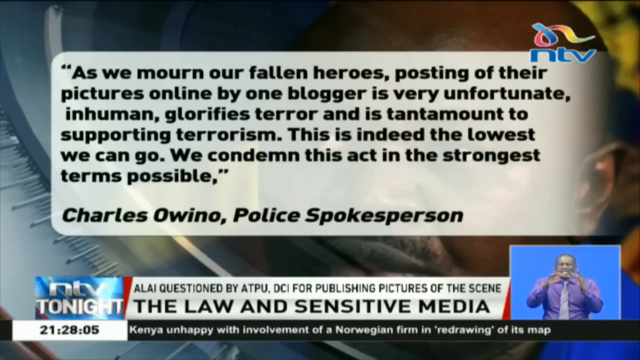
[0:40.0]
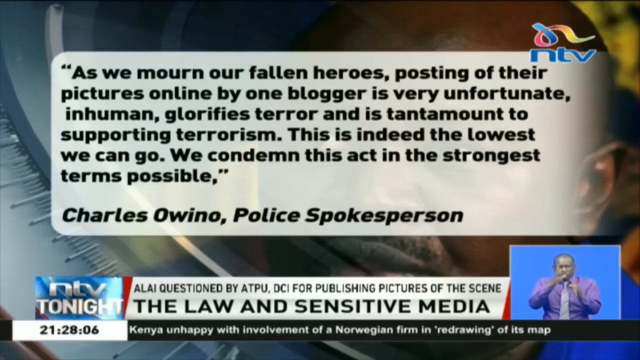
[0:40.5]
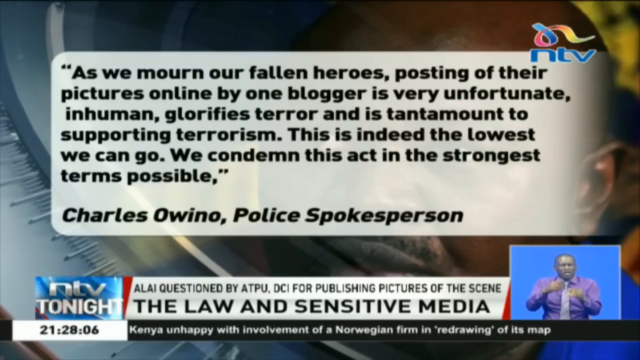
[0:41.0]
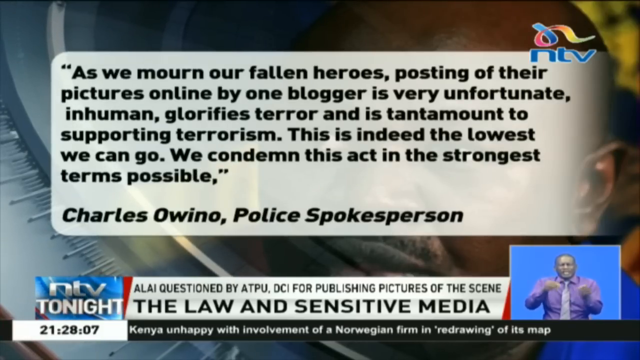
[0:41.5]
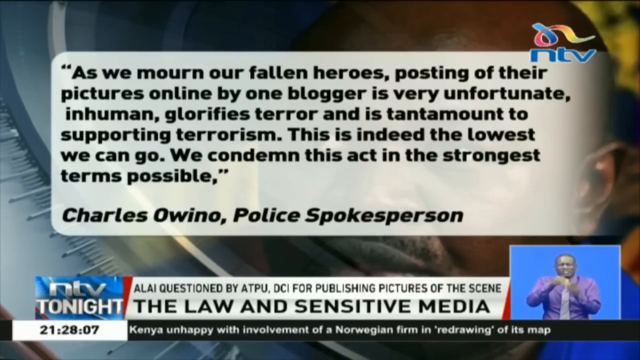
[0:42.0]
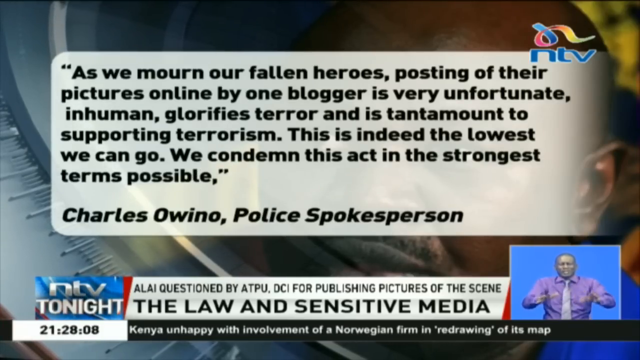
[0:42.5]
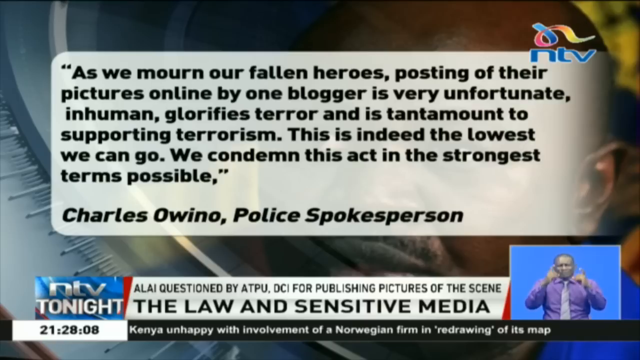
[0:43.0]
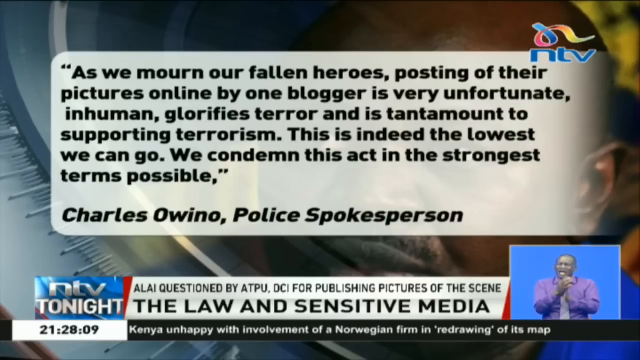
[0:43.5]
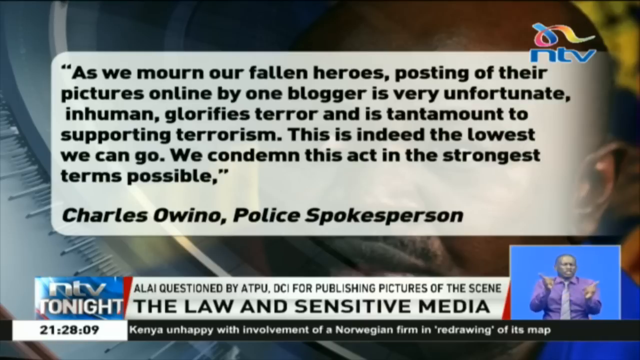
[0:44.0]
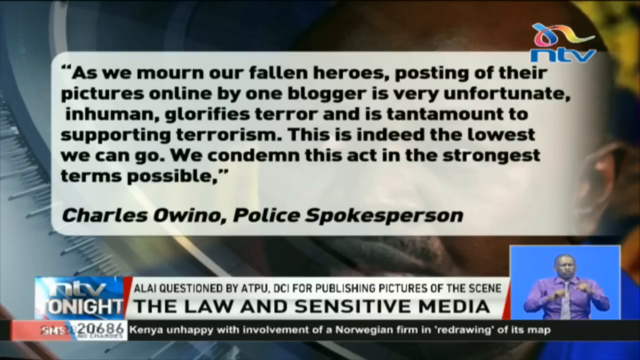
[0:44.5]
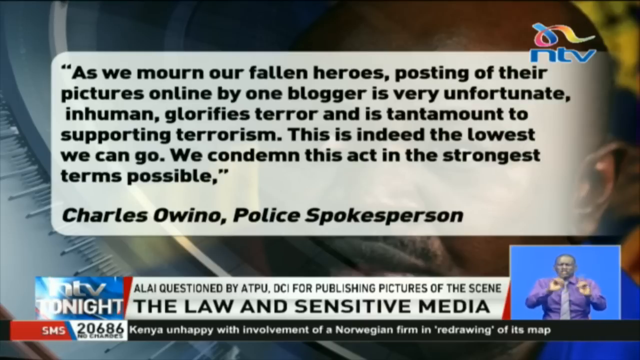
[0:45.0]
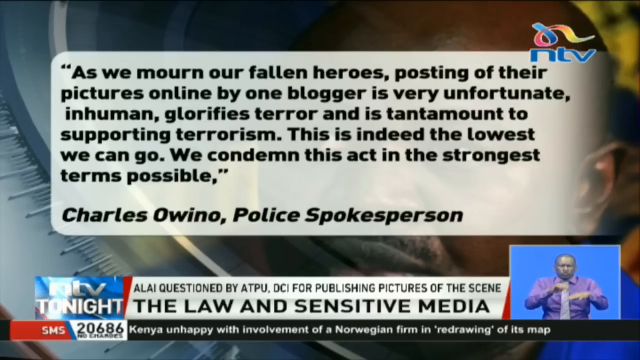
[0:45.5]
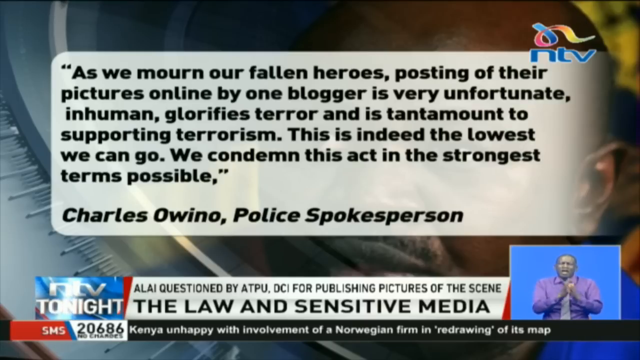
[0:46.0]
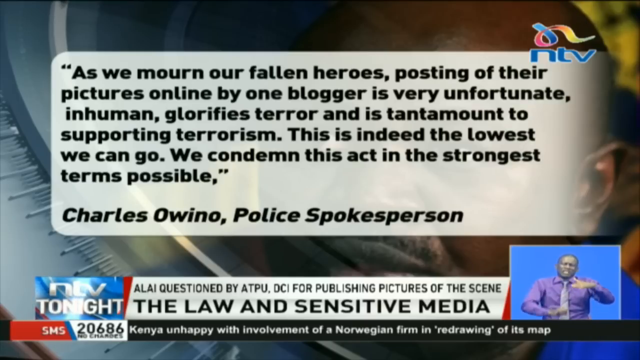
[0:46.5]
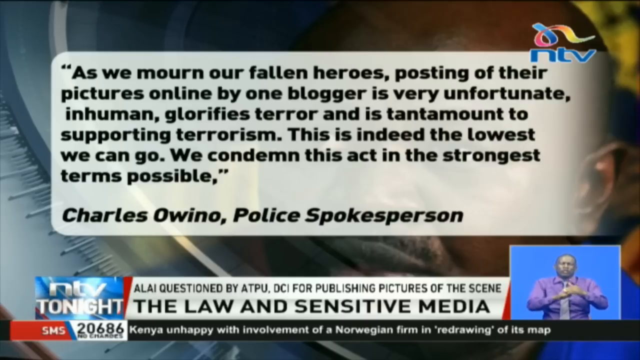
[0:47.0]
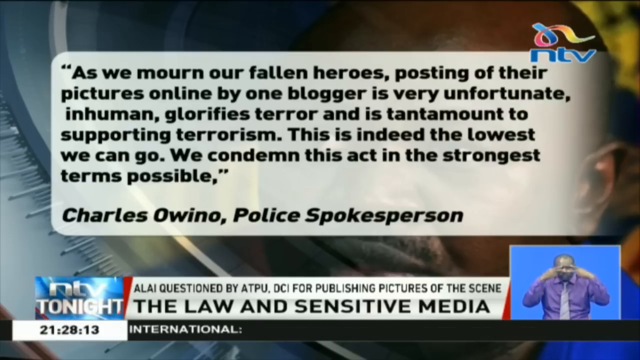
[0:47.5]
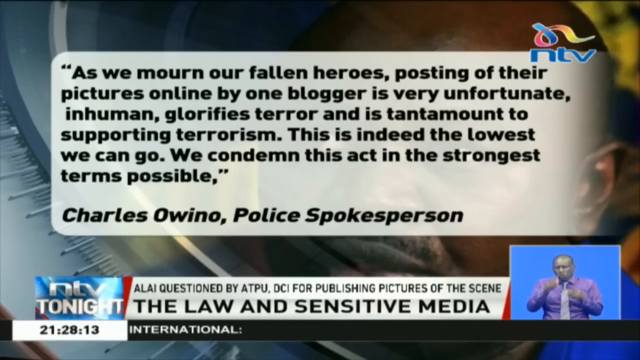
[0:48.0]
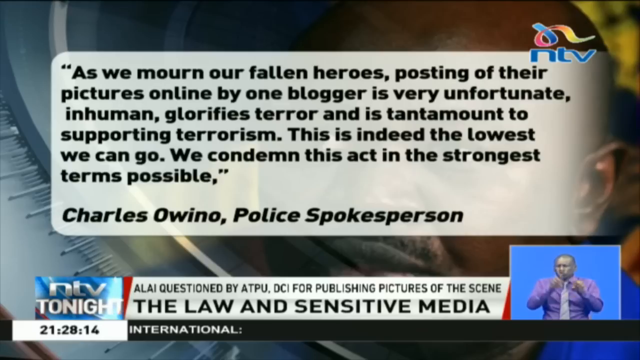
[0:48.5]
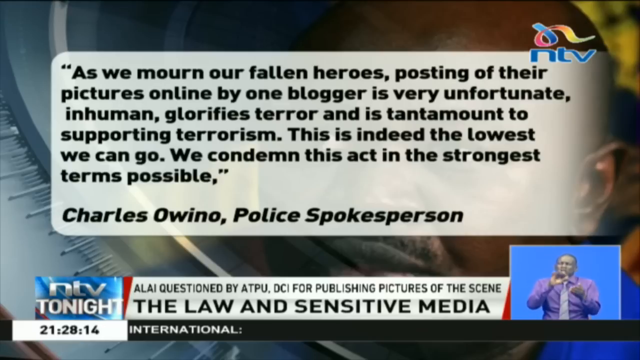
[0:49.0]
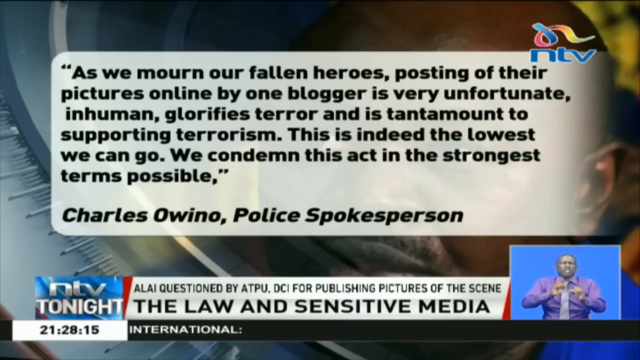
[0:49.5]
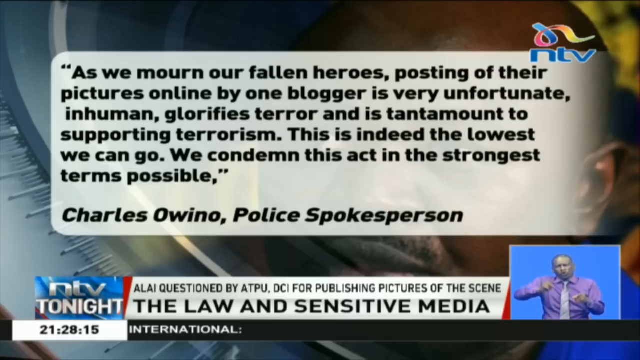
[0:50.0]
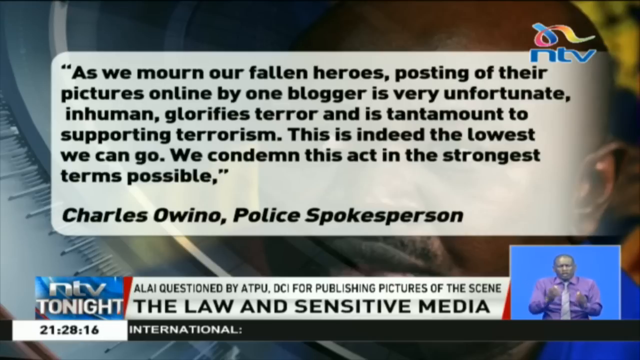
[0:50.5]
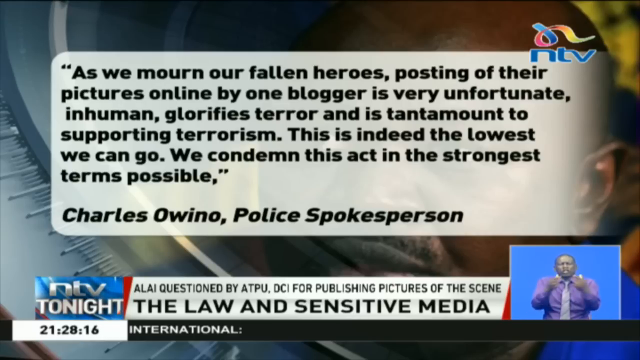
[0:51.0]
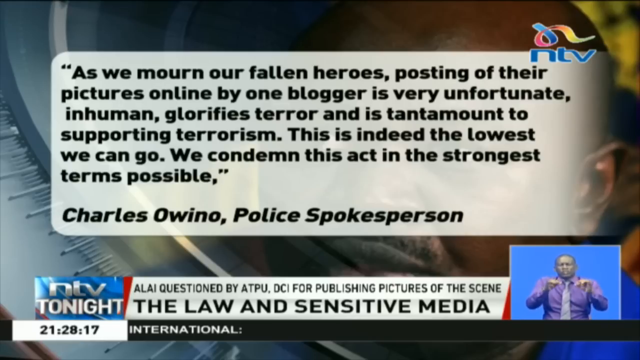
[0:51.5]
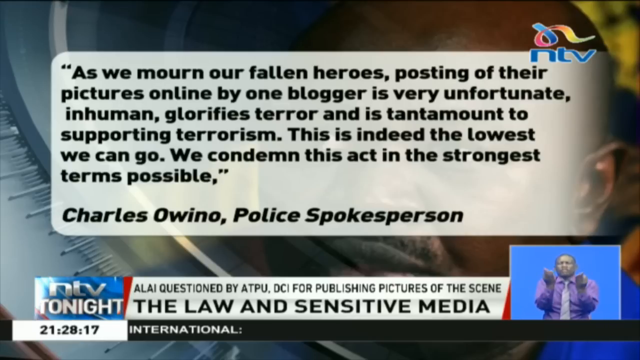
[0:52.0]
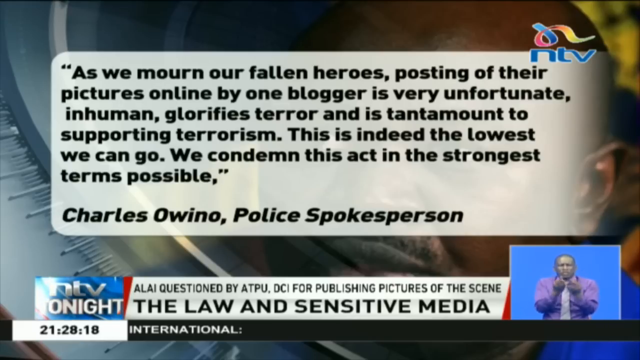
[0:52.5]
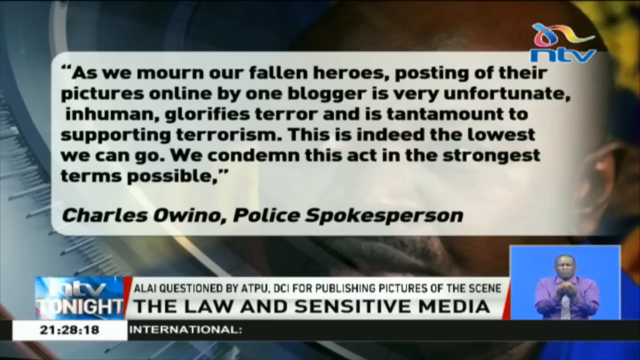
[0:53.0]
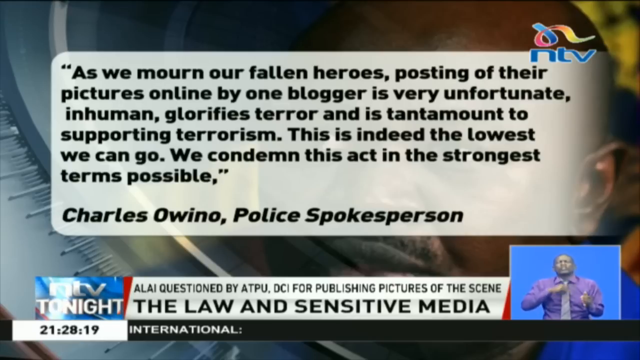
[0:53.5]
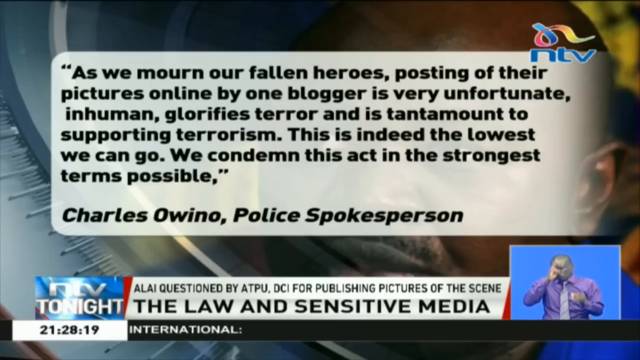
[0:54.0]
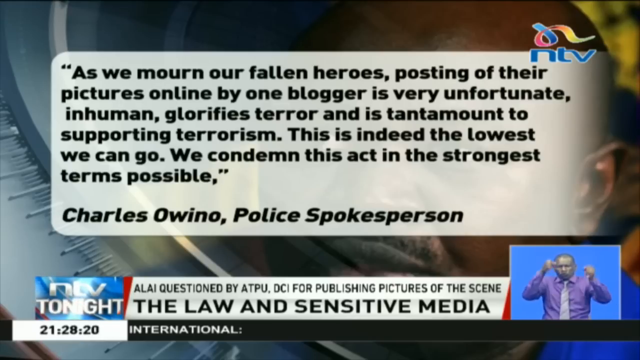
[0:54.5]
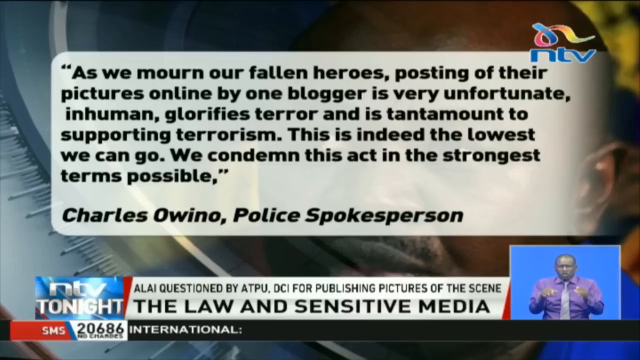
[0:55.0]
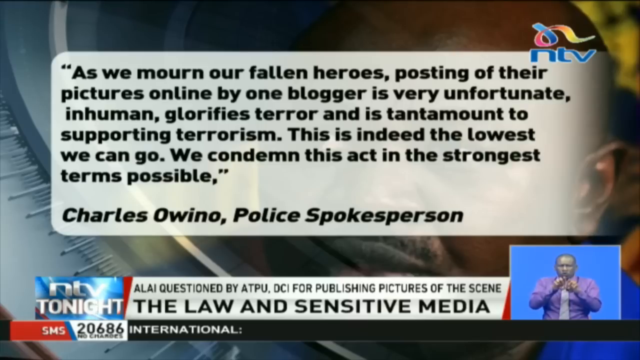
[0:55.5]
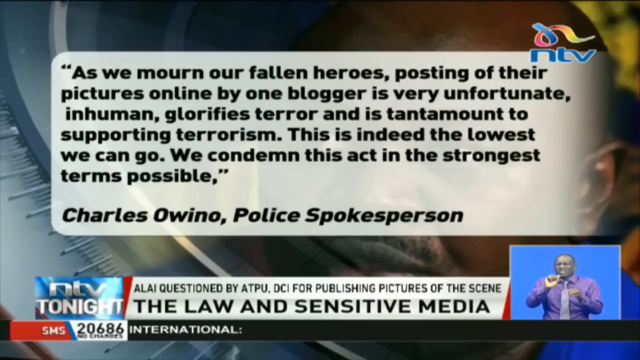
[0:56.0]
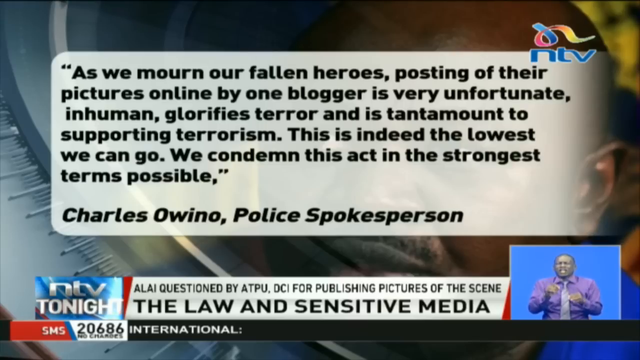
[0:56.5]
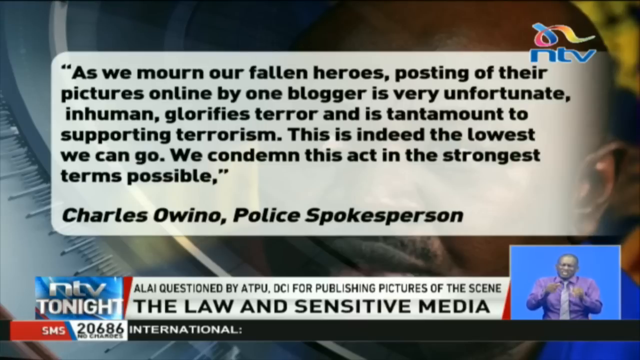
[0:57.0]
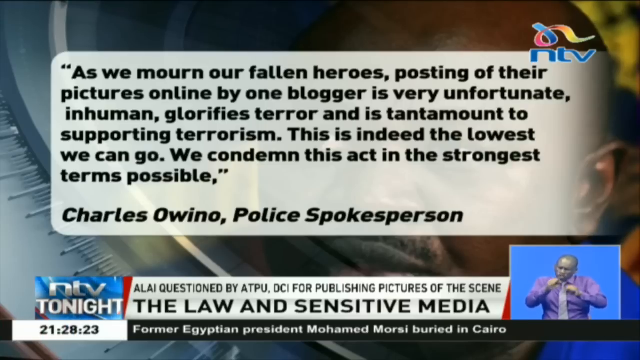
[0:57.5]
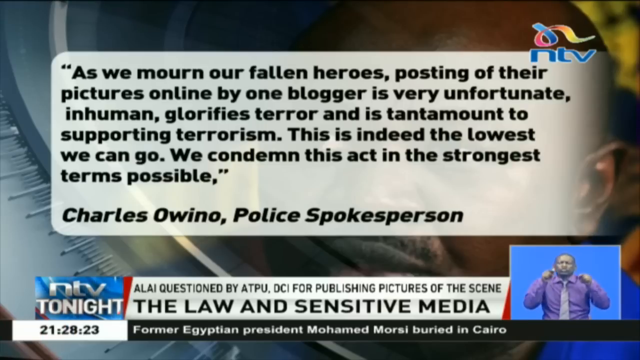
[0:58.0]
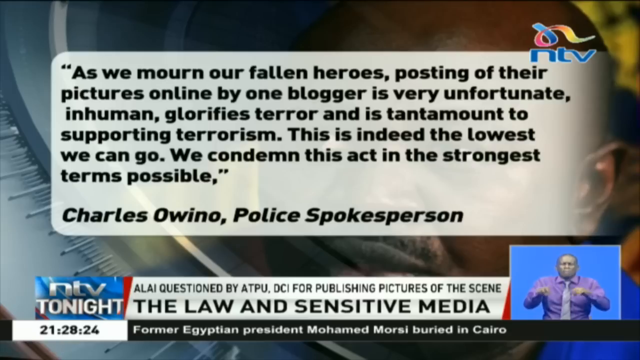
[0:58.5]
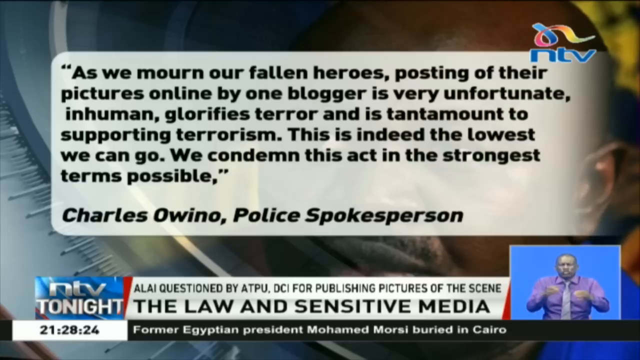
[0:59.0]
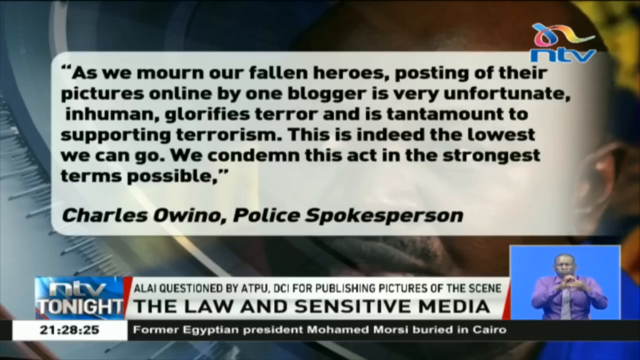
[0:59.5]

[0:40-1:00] Text in the lower part of the screen ends with "for publishing pictures of the scene," along with "The law and sensitive media" and "Kenya unhappy with involvement of a Norwegian firm in redrawing of its map." In the lower right portion of the screen, a man uses sign language to translate what is being said. At the top, a post from the police spokesperson reads "as we mourn our fallen heroes posting of their pictures online by online blogger it's very unfortunate inhuman it glorifies terror and is tantamount to supporting terrorism. This is indeed the lowest we can go we condemn this act in the strongest terms possible." It appears on a white card with black text. The NTV logo is in the upper right corner, "NTV Tonight" is in the lower left corner, and beneath it the time reads 21 28 05. The bottom of the screen then begins to read "former egyptian."